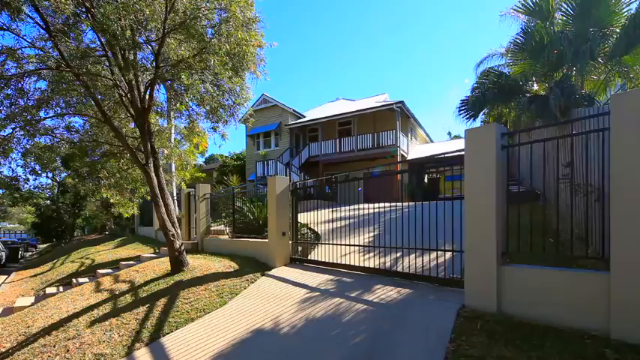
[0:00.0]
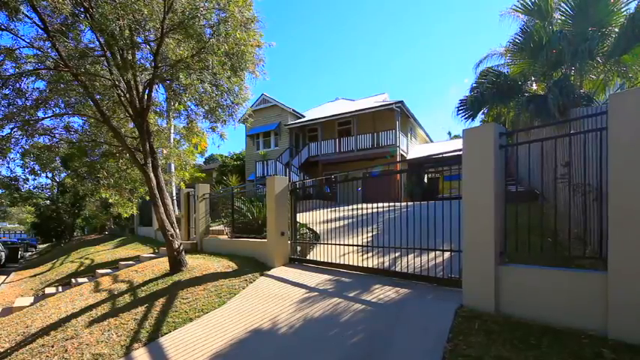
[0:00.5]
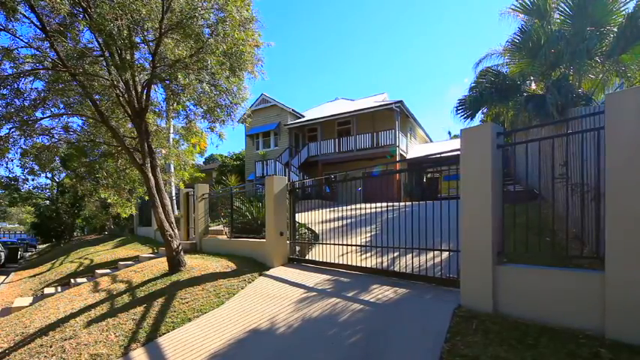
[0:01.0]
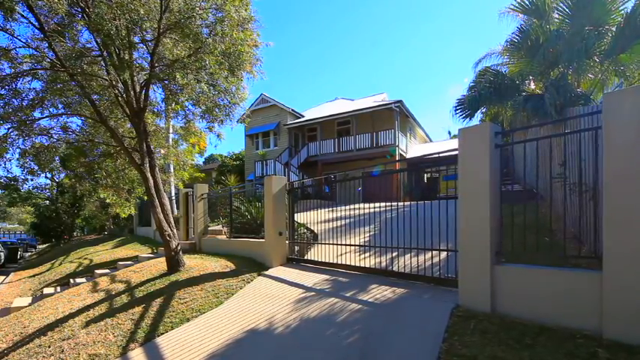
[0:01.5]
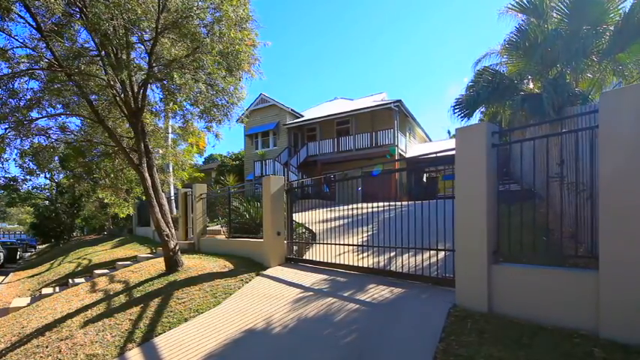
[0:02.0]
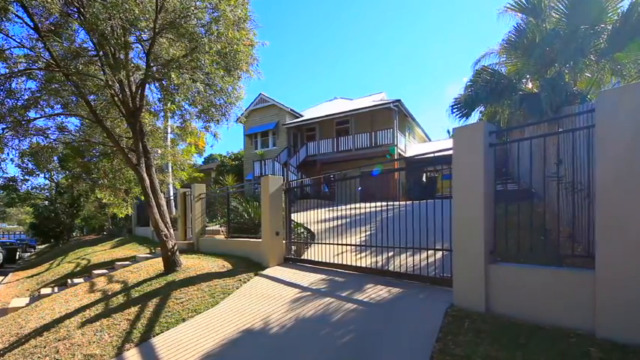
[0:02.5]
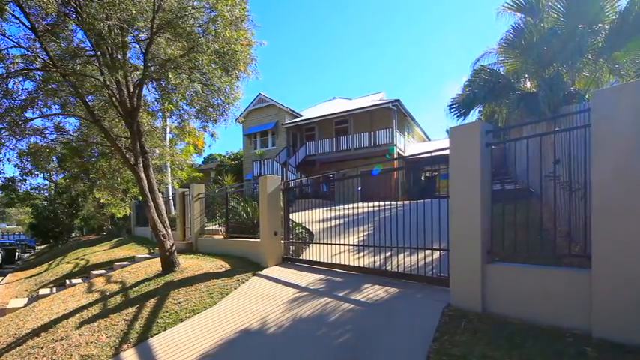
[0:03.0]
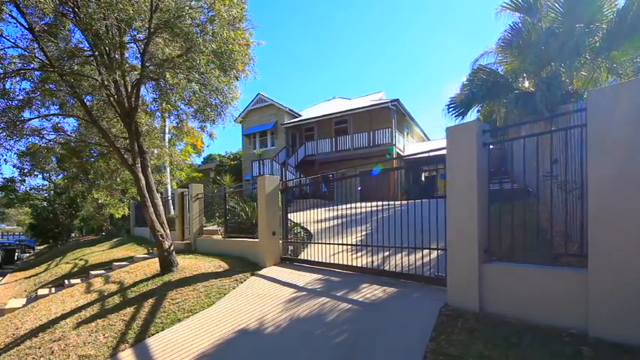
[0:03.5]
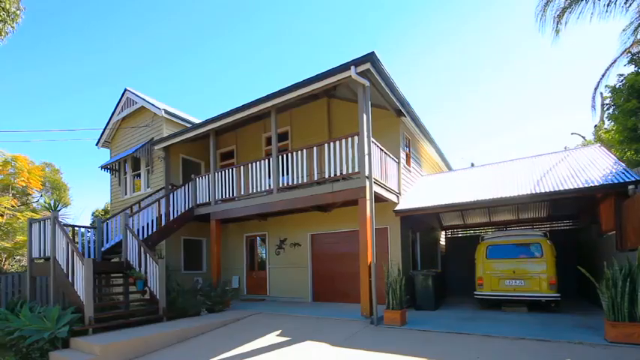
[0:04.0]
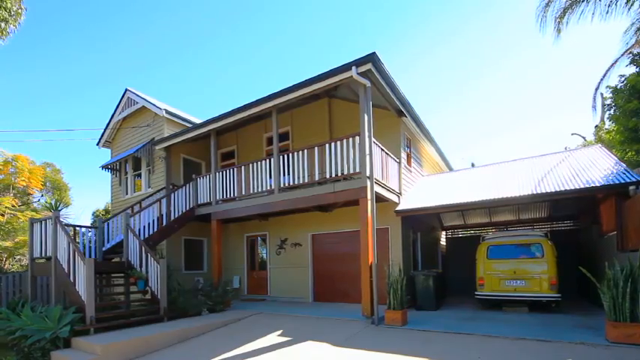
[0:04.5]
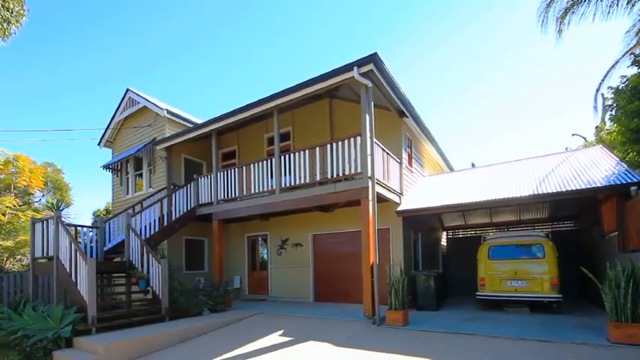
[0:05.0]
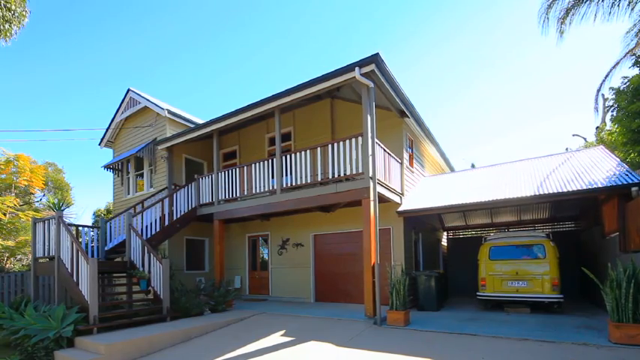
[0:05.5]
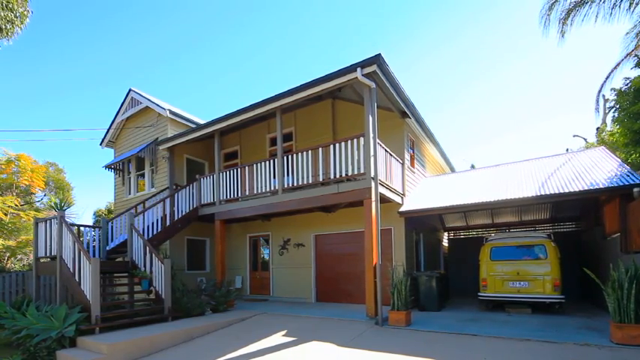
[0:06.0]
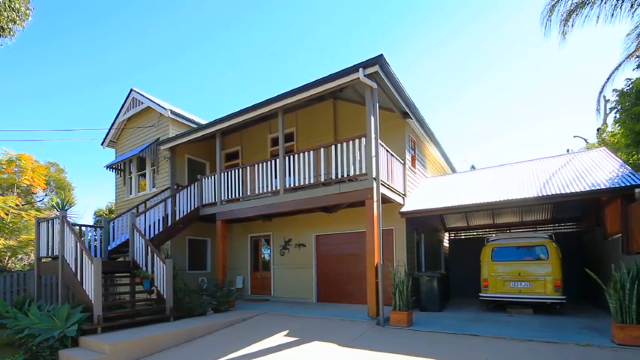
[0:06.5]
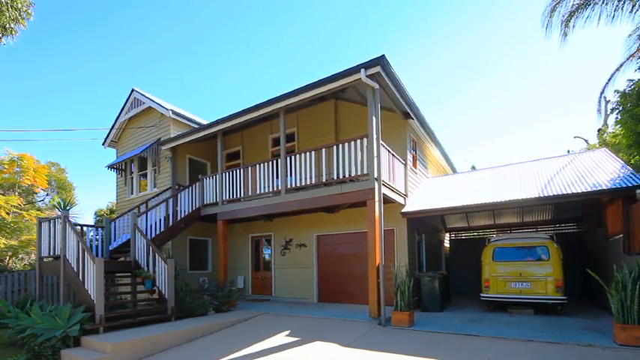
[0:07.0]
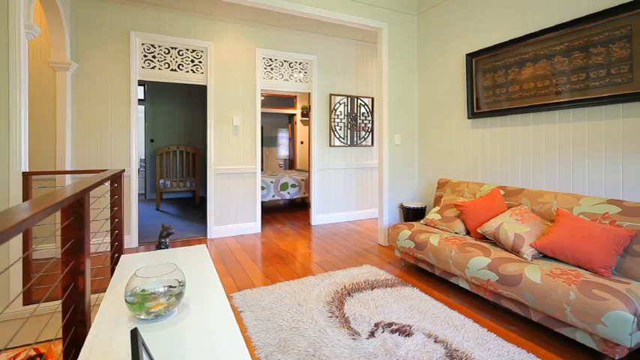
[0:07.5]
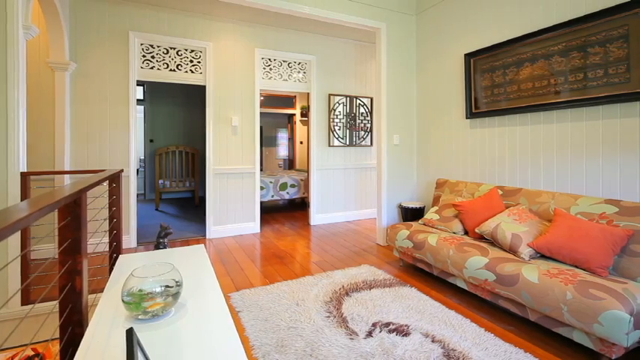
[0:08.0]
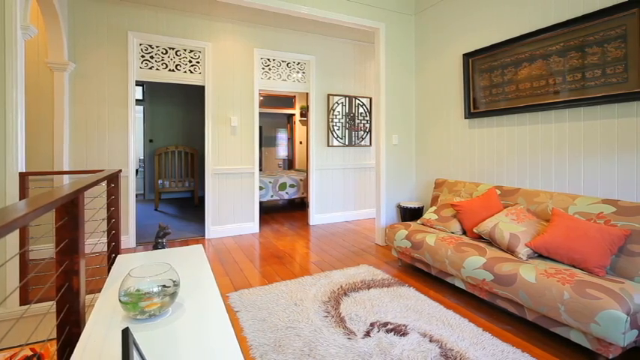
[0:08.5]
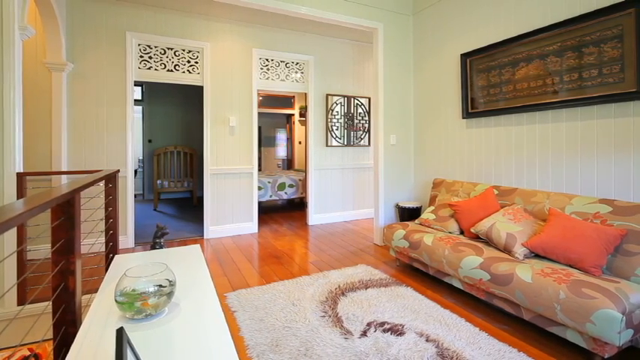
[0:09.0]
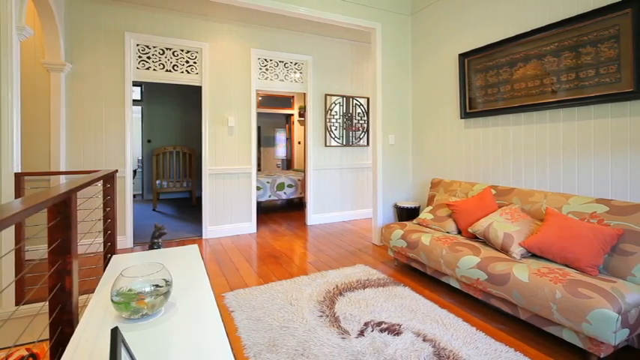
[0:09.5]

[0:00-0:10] The video opens on what looks like a pretty large home with a gate around it. It appears to be two stories, with a large stairwell leading up to a balcony. There is a palm tree and another tree outside, and a garage with a yellow vehicle in it. The interior is shown briefly. The living room has a very colorful couch whose design is somewhat reminiscent of a seventies look, with a lot of red, orange and pink; on it are peach pillows and a pillow that matches the sofa. The look is modern but a little old-fashioned at the same time. There appears to be a small display fishbowl and a rug on the floor. The living area is shown only briefly, with a glimpse of another part of the place: a chair in another room, some other type of structure, and another room off the living room.